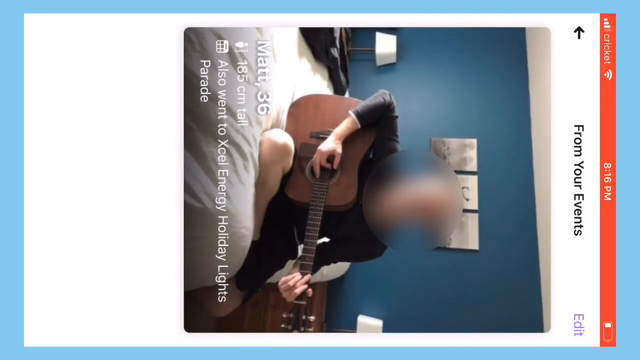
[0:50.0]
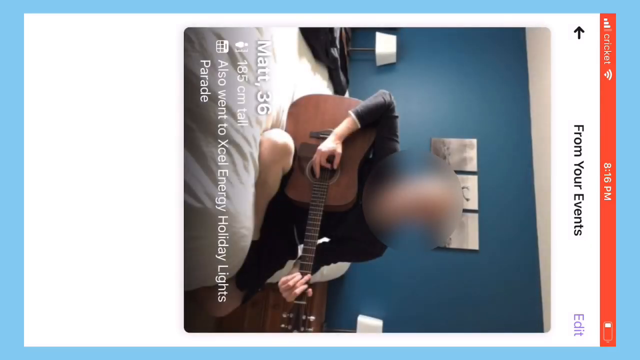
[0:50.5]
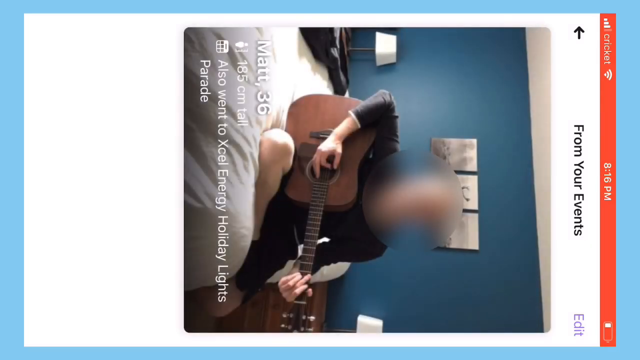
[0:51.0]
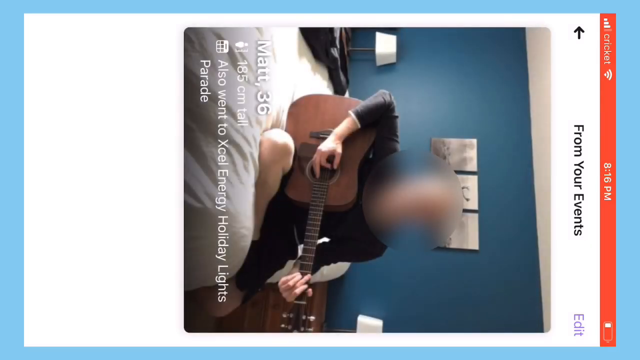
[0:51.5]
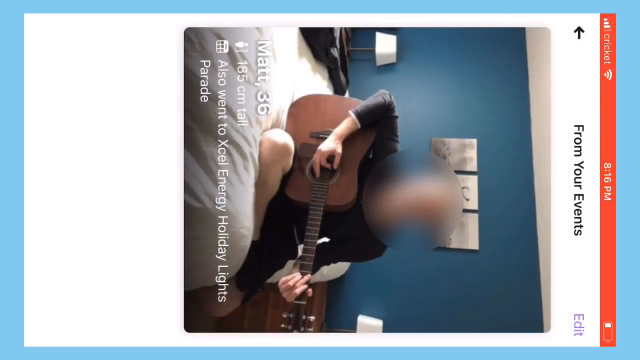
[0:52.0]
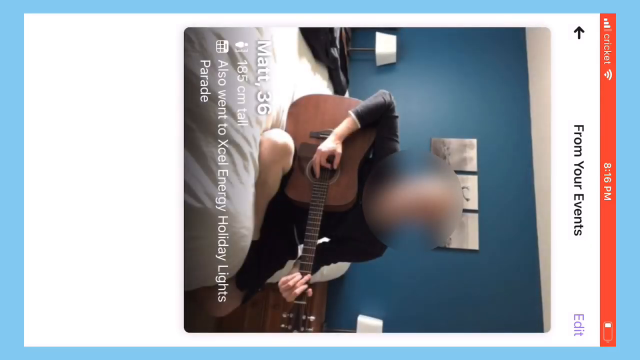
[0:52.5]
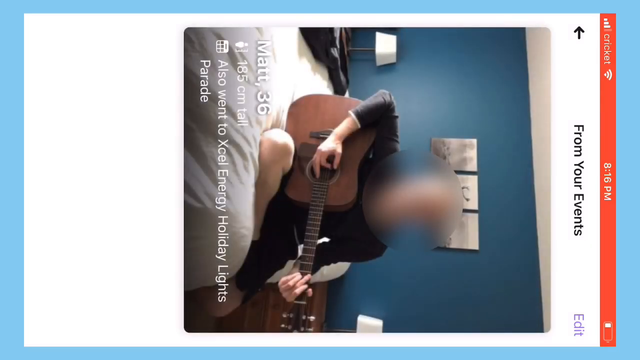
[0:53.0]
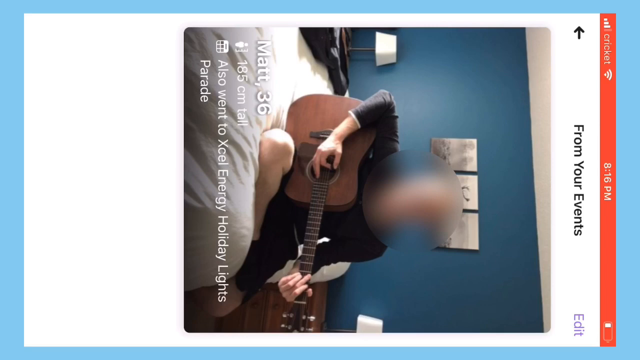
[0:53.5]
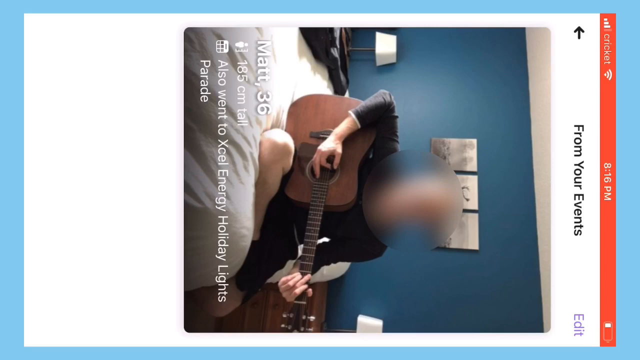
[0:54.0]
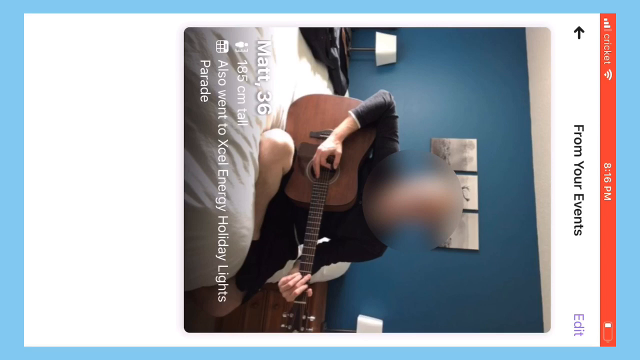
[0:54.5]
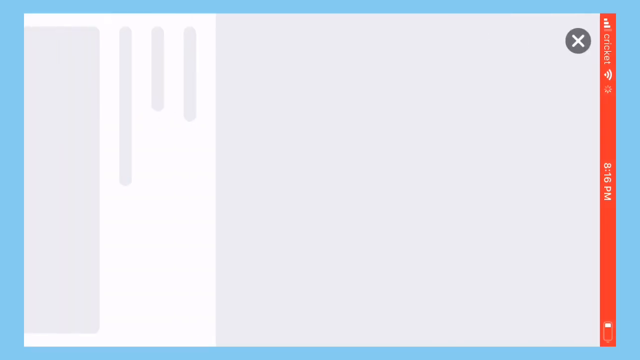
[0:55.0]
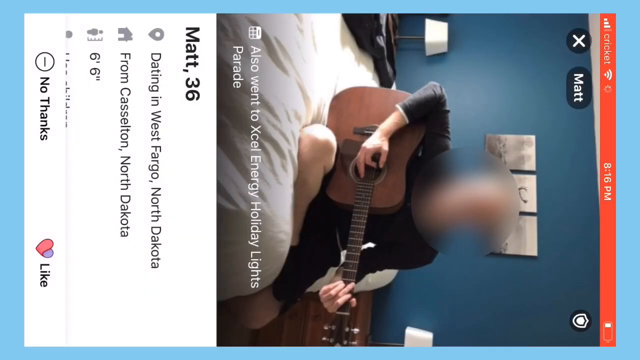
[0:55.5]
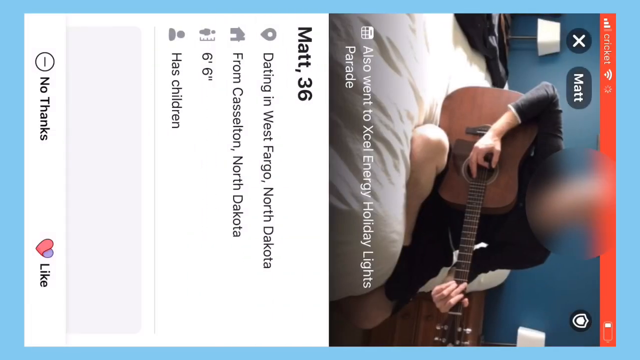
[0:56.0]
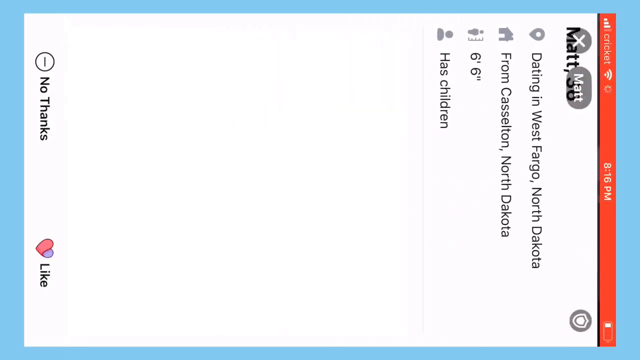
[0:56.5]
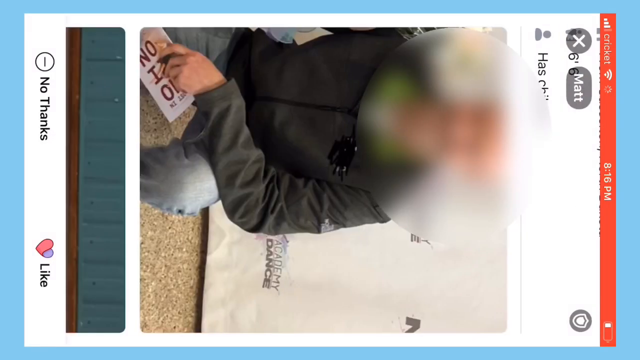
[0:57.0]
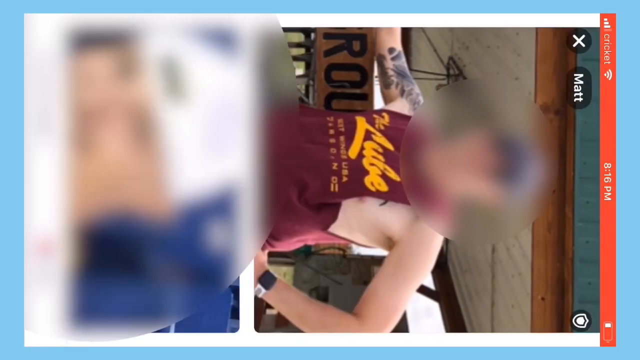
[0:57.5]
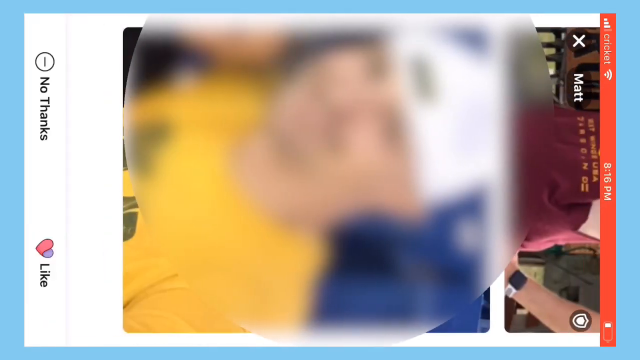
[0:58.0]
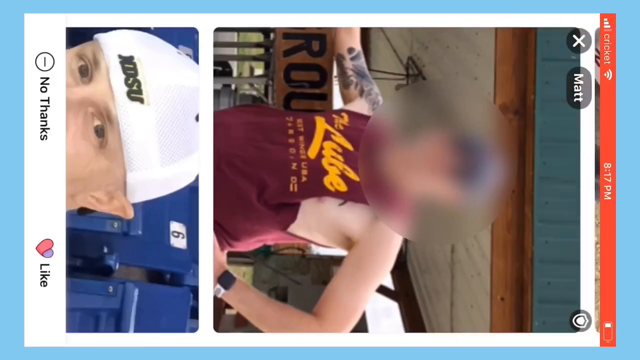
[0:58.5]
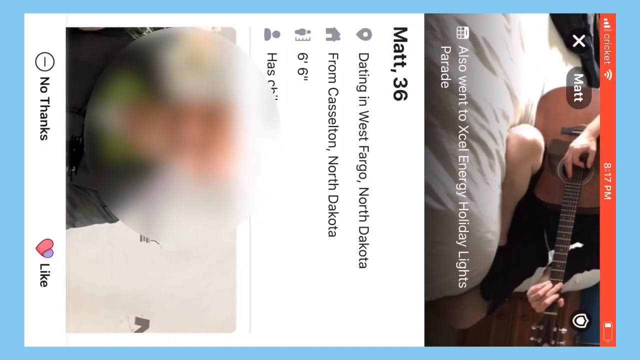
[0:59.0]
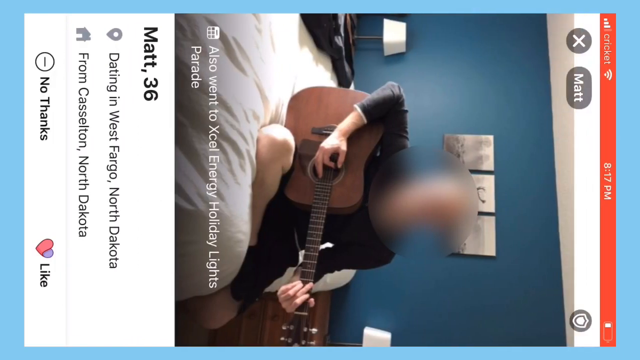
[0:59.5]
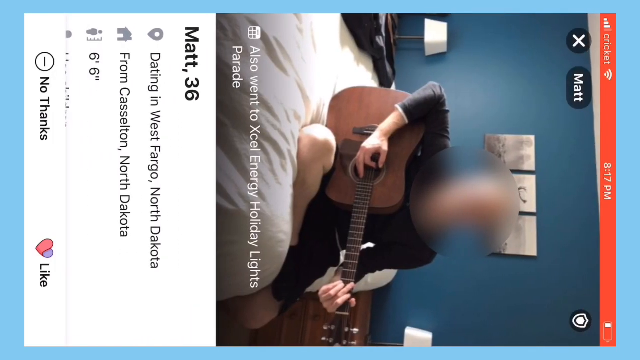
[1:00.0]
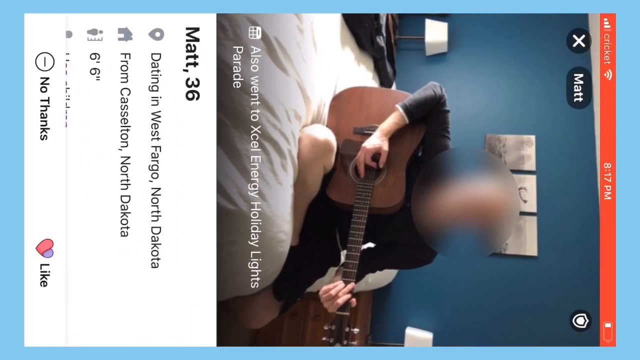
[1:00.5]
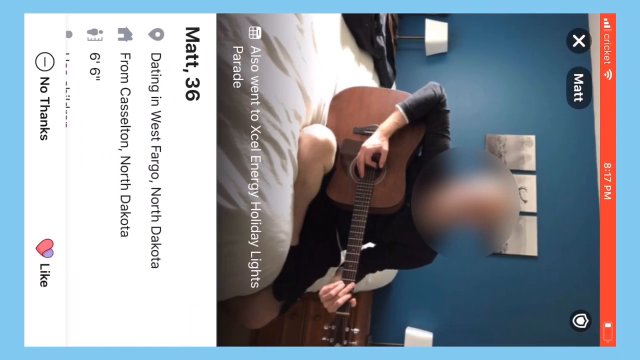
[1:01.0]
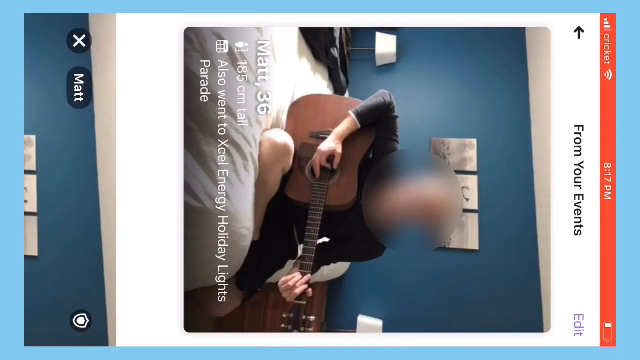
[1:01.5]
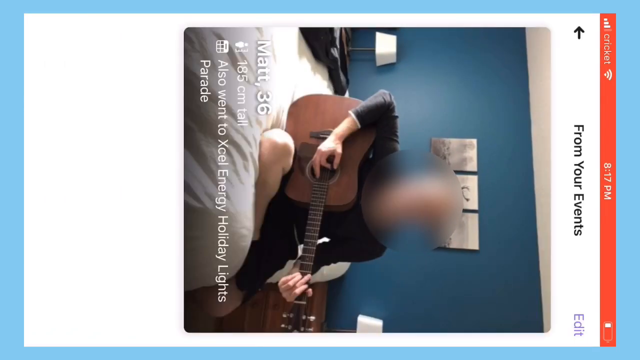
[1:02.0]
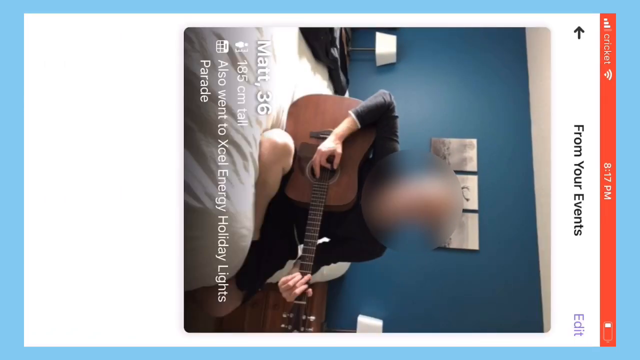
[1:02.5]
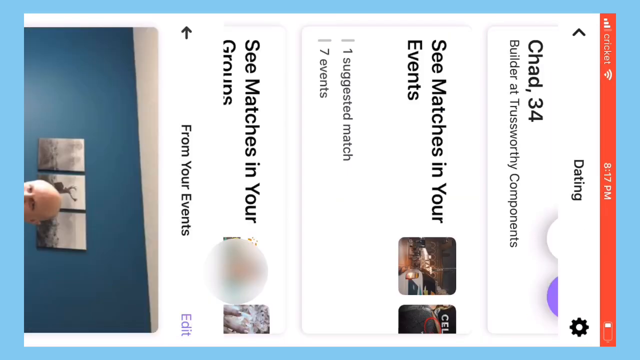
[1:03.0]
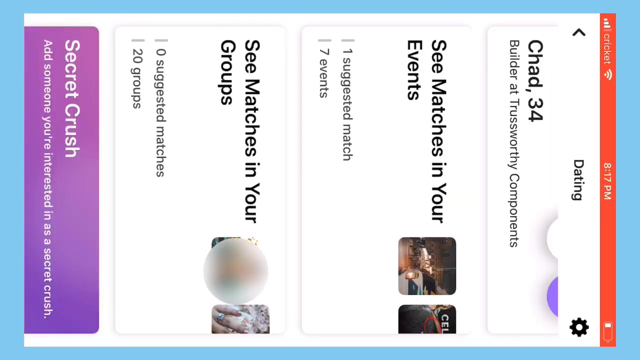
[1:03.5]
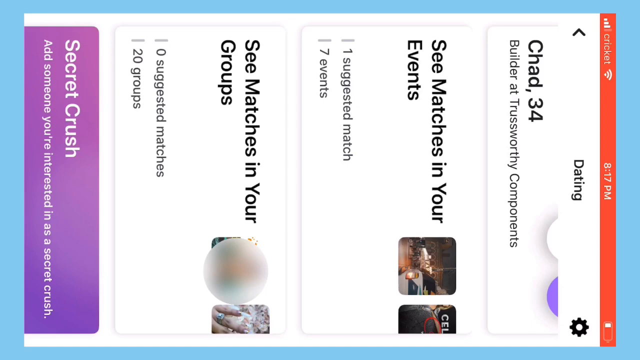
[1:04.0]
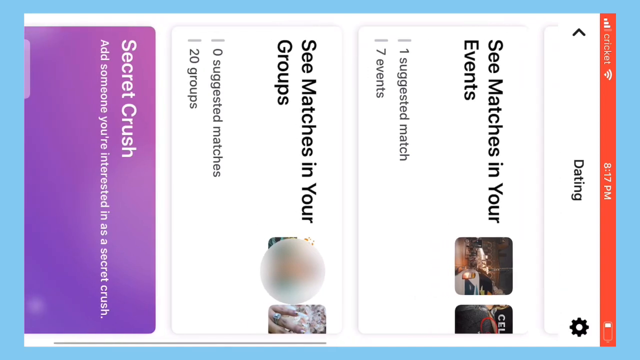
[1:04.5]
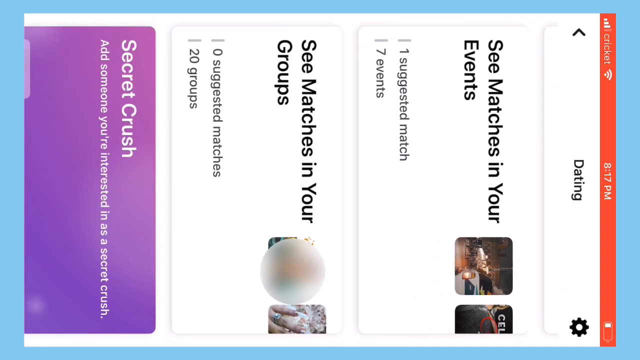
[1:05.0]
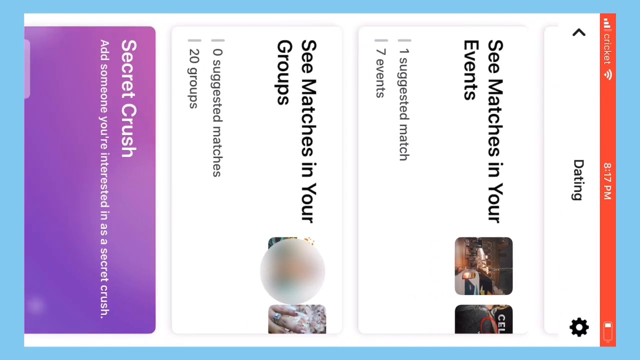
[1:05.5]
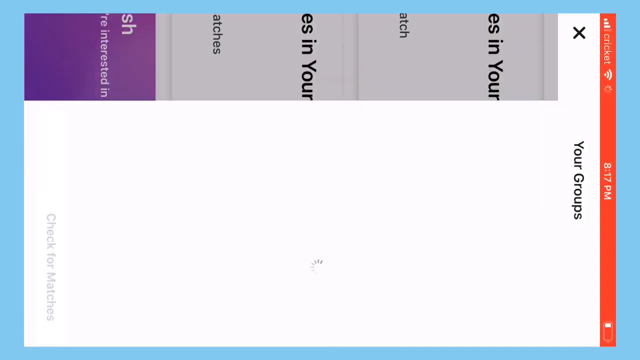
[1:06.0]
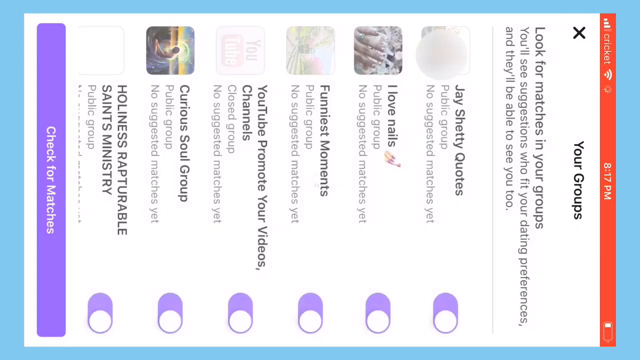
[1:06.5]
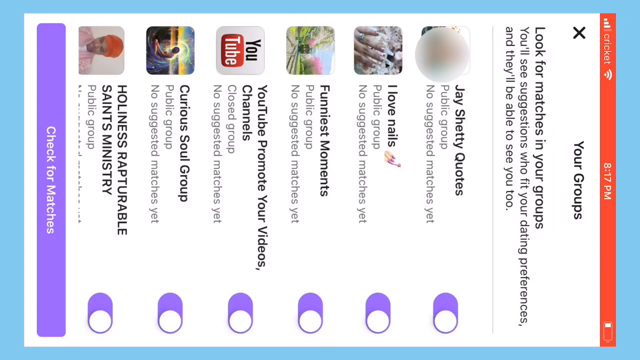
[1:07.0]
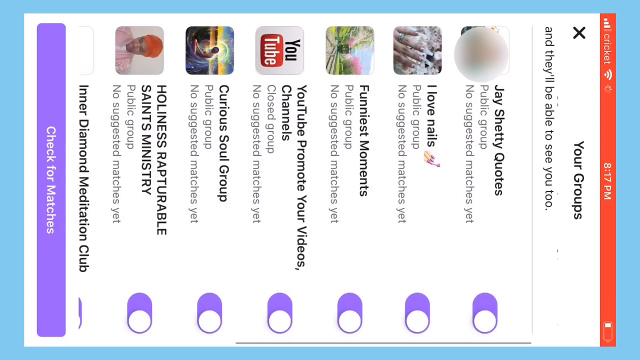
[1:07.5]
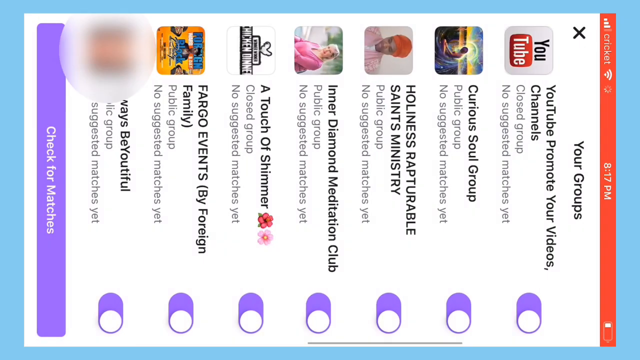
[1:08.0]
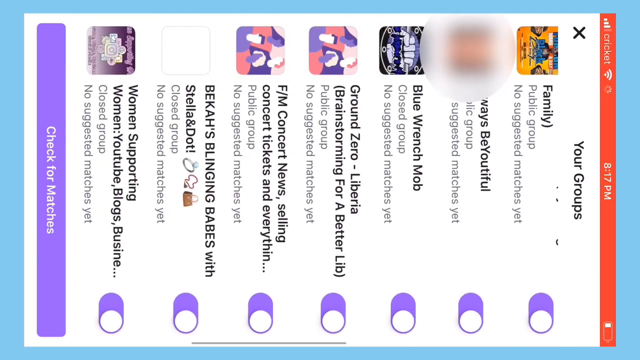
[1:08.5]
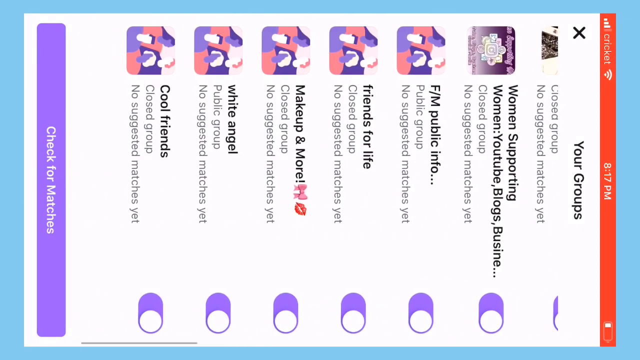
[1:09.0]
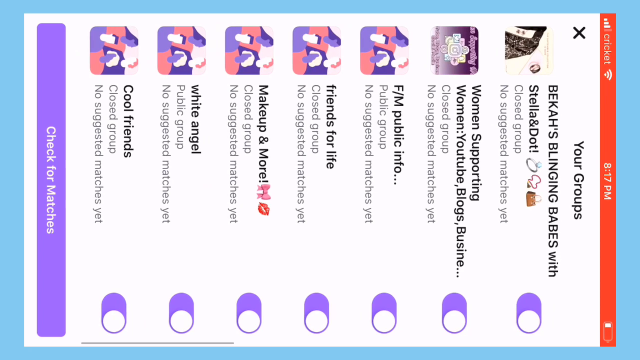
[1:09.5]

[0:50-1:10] The smartphone screen grab, a portrait view set sideways so that the top is on the right side, shows someone's social media profile. At the very top it reads "from your events." A photo shows a man playing a guitar on a bed with a blue painted wall behind him, his face blurred out with a circle blur. He rests the guitar on his right knee, and his left leg hangs off the bed. His profile reads "Matt, 36, 185 cm tall, also went to Xcel Energy Holiday Lights Parade." The screen swipes upward, shows a green screen, and returns to the profile, showing that the profile was interacted with. It reads "Matt, 36, dating in West Fargo, North Dakota from Castleton, North Dakota, 6'6", has children." Various photos of the man flash by as the screen is swiped, appearing as rightward swipes in the sideways video, with his face blurred out in all of them, before it returns to the top of Matt's profile.